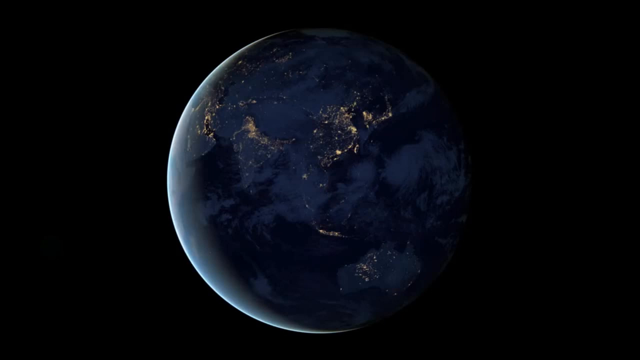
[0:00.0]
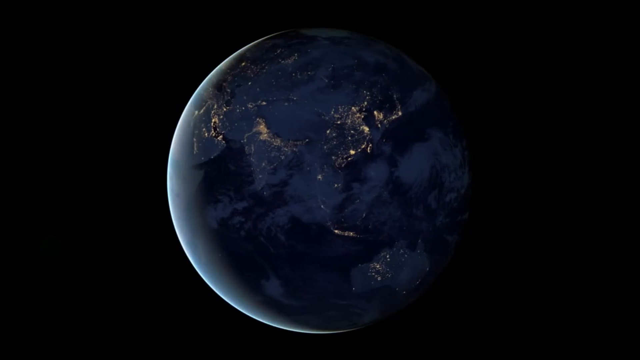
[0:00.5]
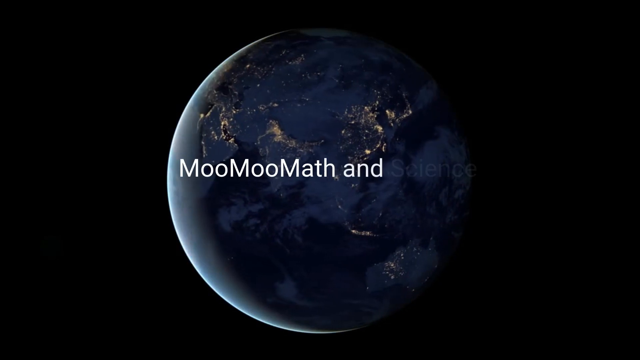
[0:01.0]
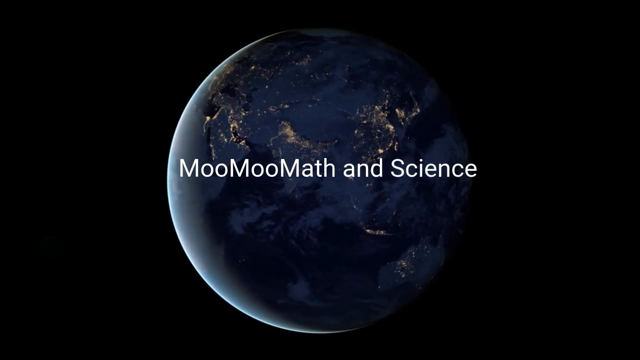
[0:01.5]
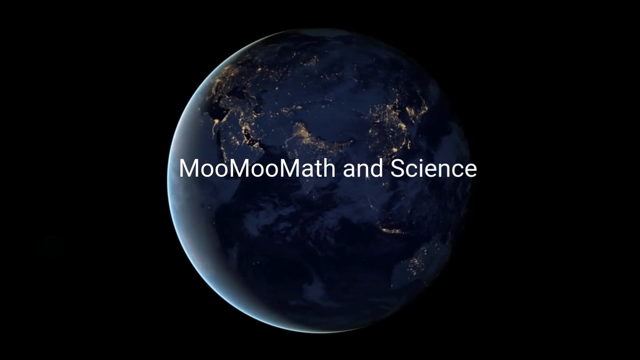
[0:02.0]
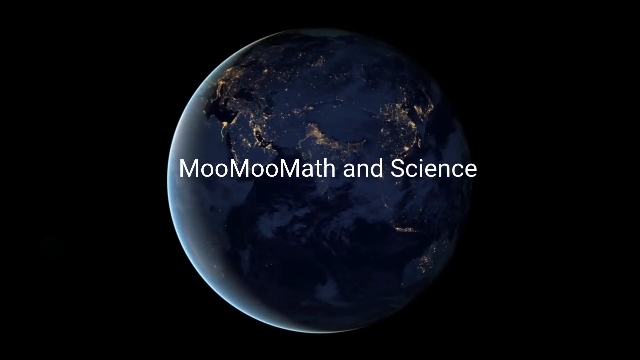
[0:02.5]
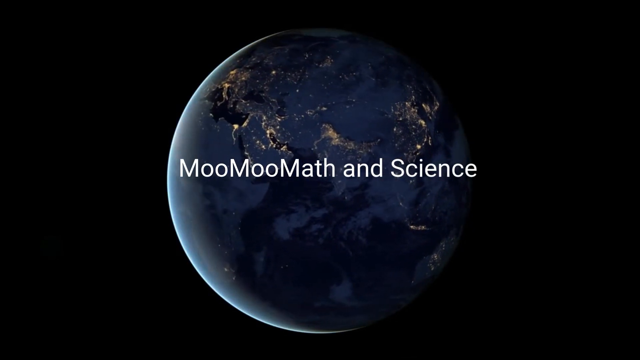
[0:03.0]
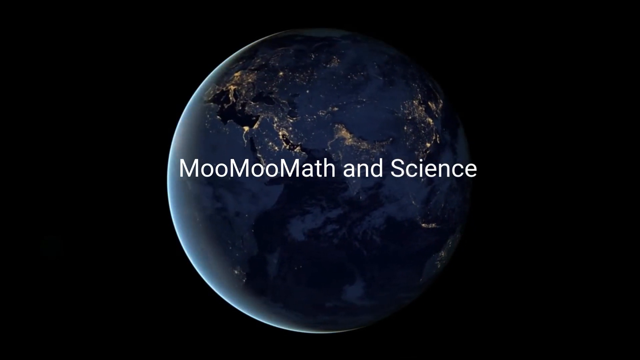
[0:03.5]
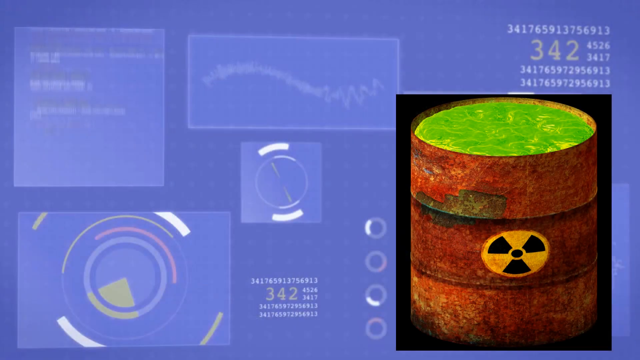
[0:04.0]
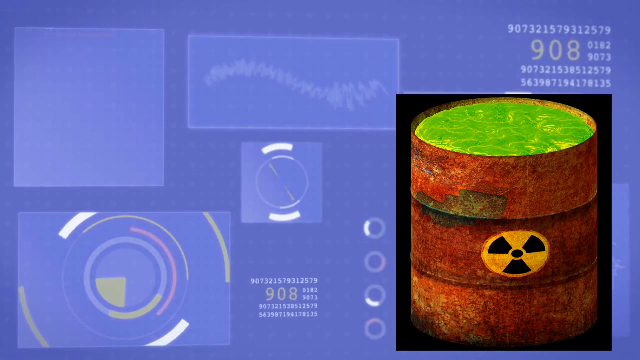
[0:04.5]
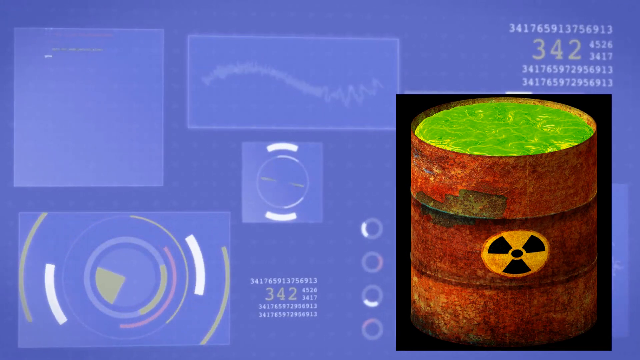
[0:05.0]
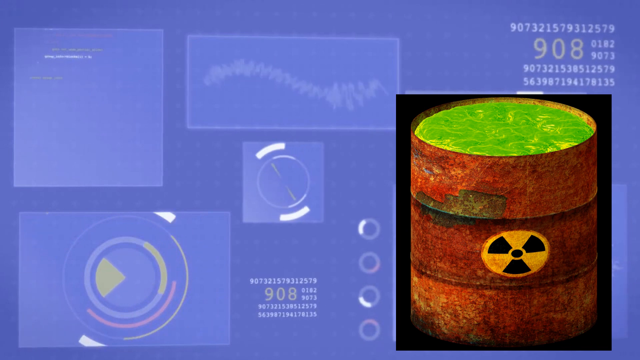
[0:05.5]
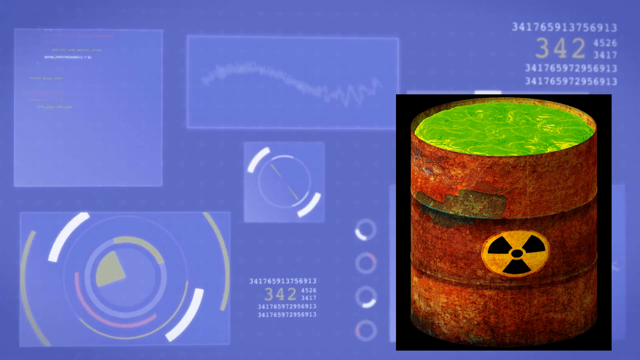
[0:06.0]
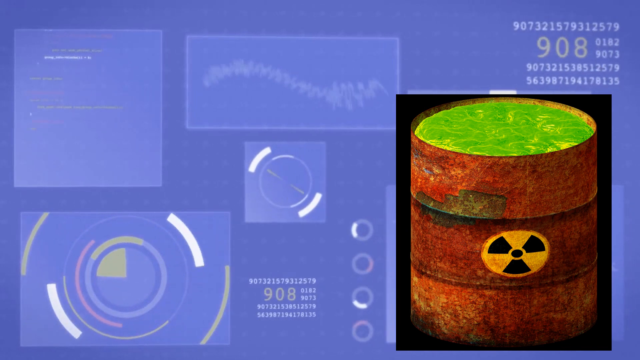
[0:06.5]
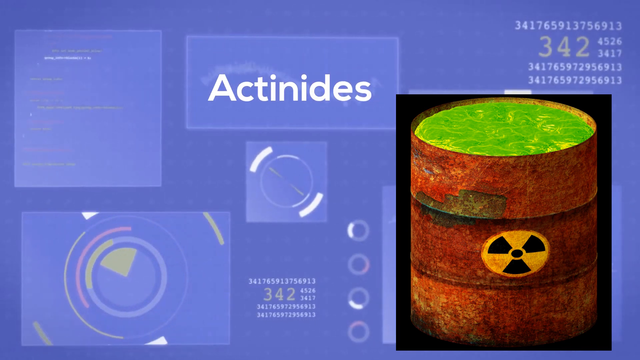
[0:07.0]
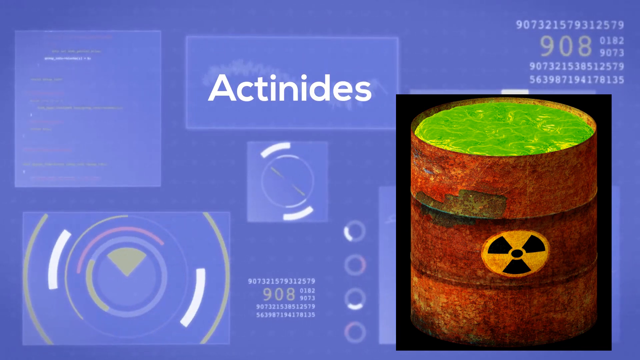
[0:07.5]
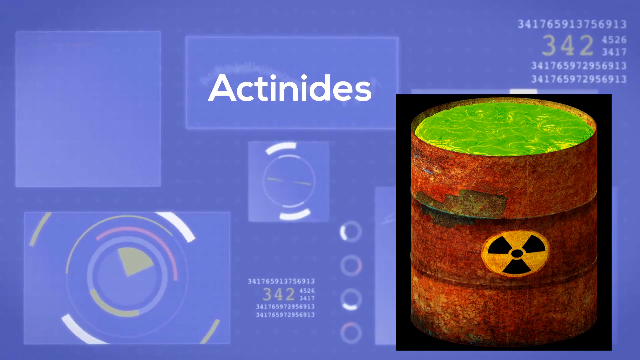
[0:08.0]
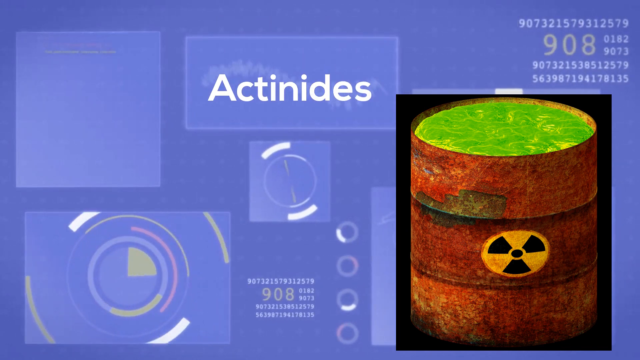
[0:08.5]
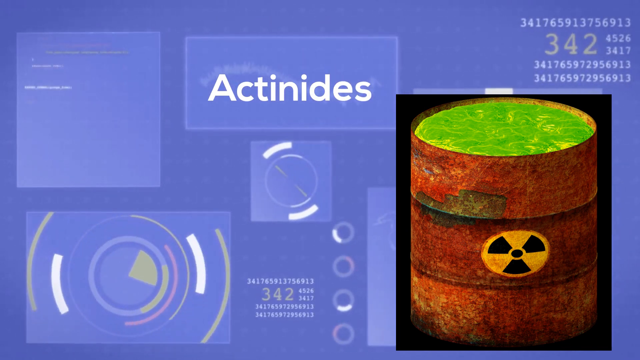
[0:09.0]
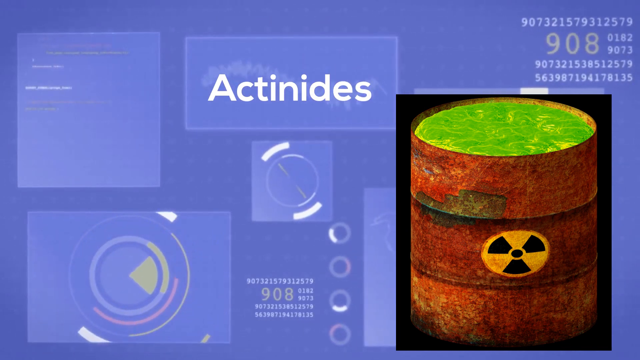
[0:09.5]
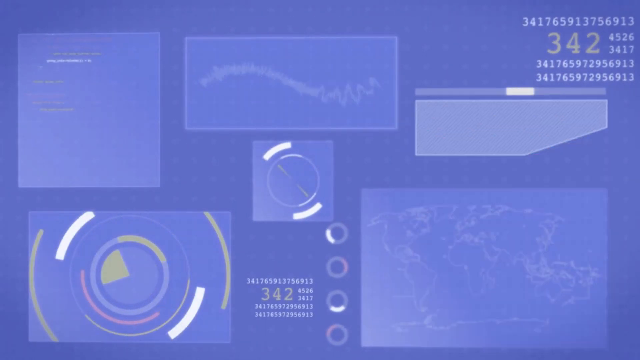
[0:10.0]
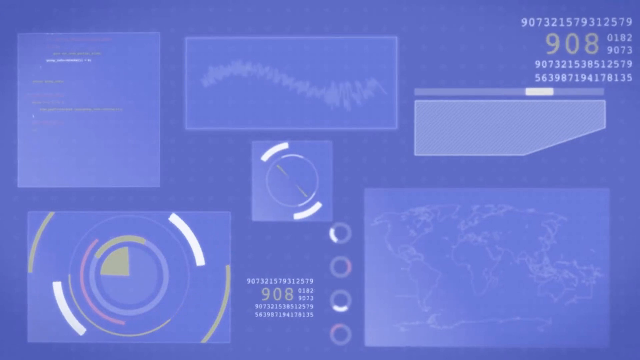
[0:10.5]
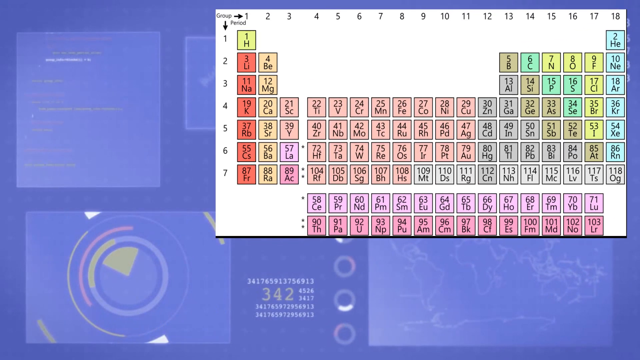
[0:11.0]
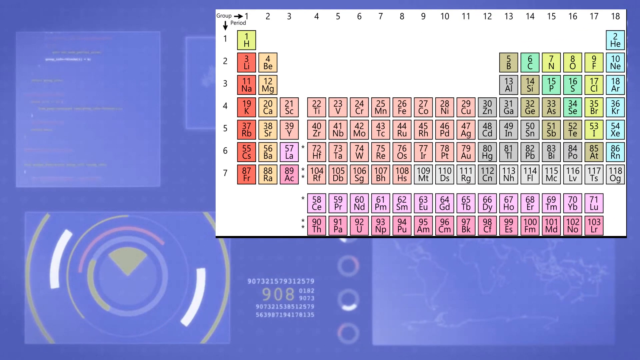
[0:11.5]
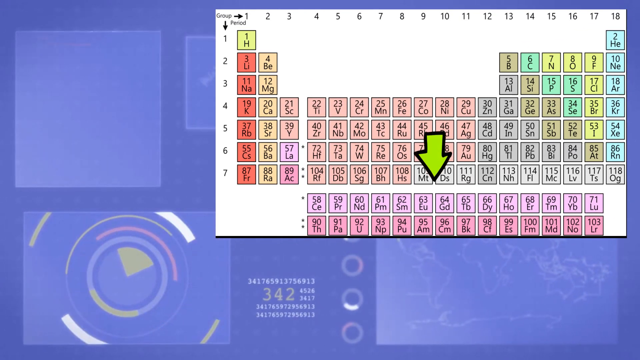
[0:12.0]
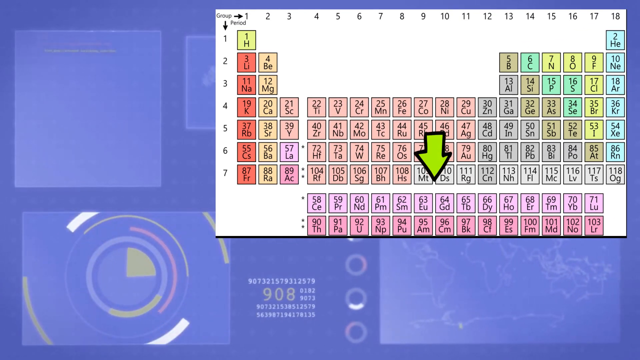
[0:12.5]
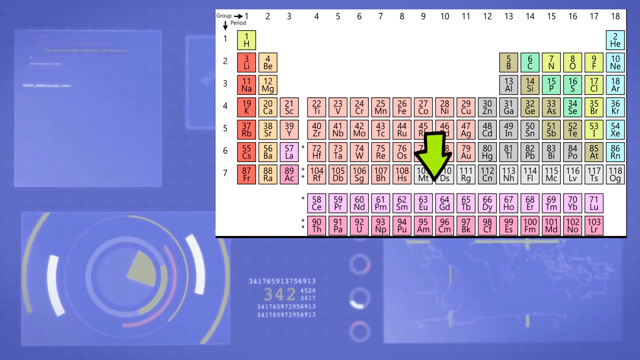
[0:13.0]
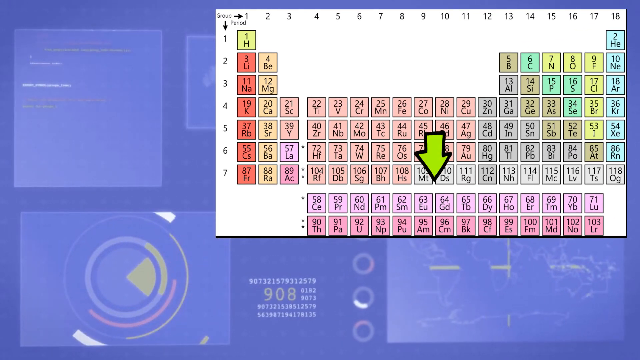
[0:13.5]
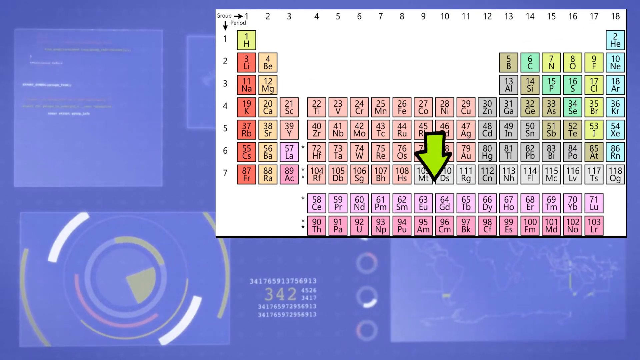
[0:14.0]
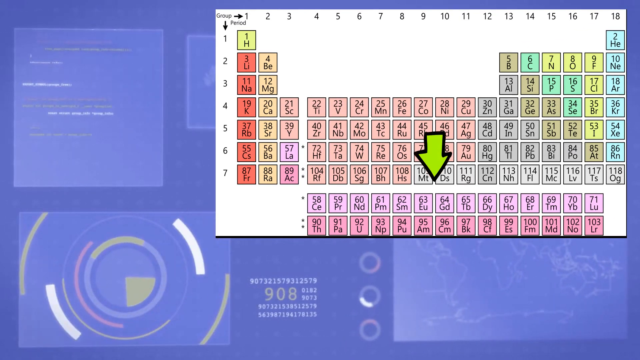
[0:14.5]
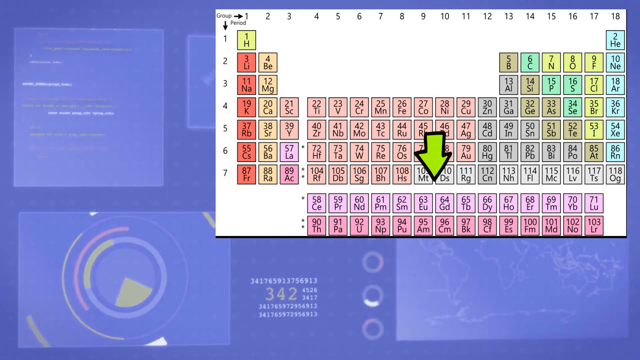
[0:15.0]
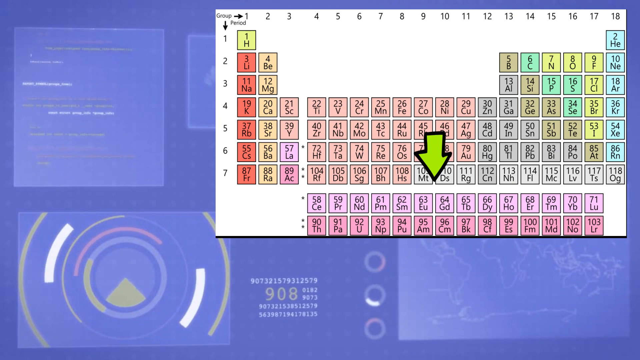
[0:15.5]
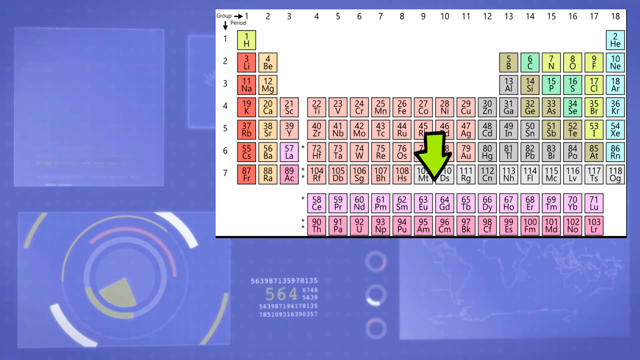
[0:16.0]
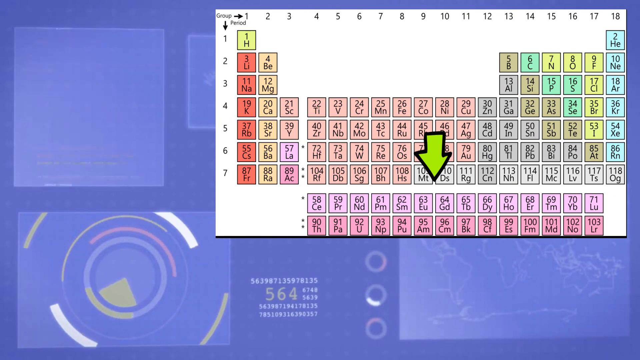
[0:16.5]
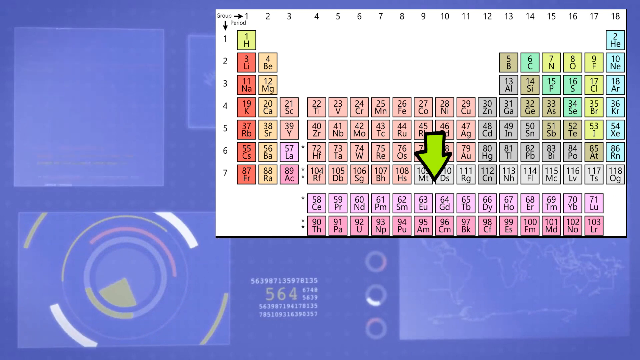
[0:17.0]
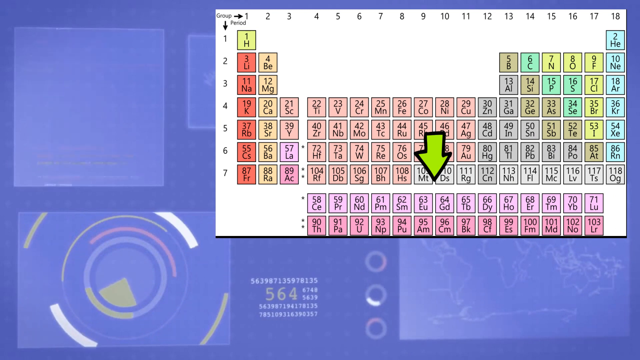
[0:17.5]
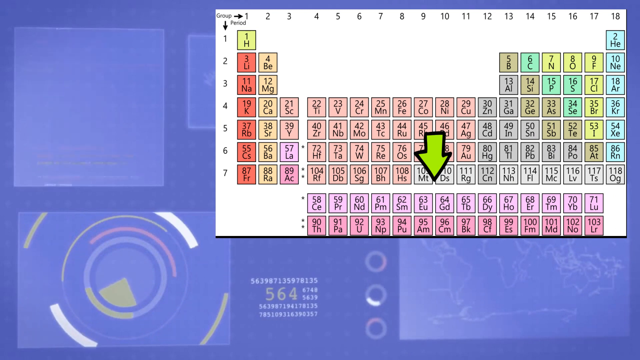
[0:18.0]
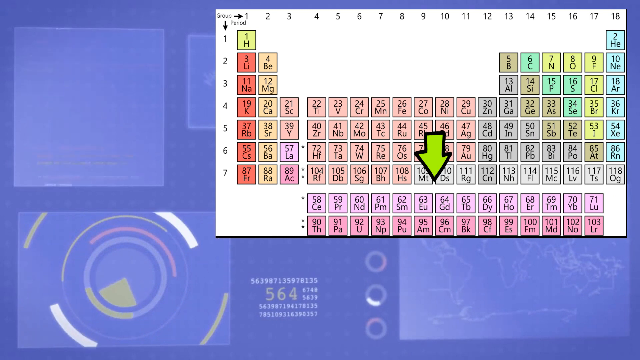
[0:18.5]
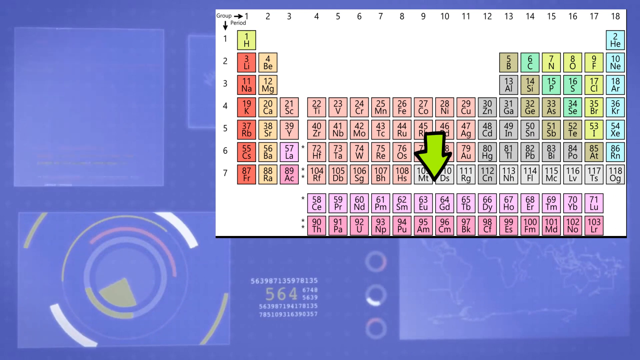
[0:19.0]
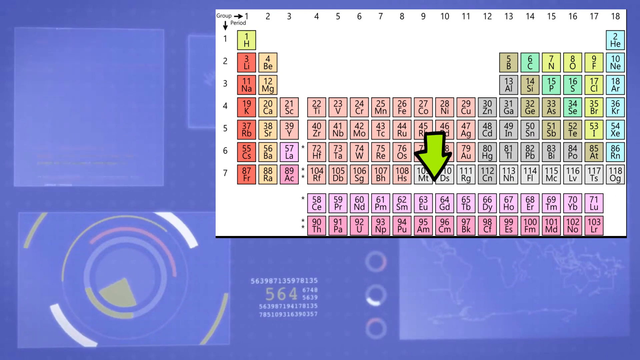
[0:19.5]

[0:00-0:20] A giant, sort of animated Earth orbits around very slowly. While it turns, a title comes up that reads "Moo Moo Math and Science." The view of the Earth is sort of on its dark side; the sun is off to the far left and cannot actually be seen, but its light shines on the Earth from the left side. The video then cuts to some sort of animation with a toxic oil drum at the bottom right, filled with a bunch of green toxic stuff and with a hazardous sign imprinted on it. Text comes in from the top reading "Astindas," apparently pointing out where it sits on the periodic table: it points toward the 58 through 103 category at the bottom, which is not part of the main periodic table.